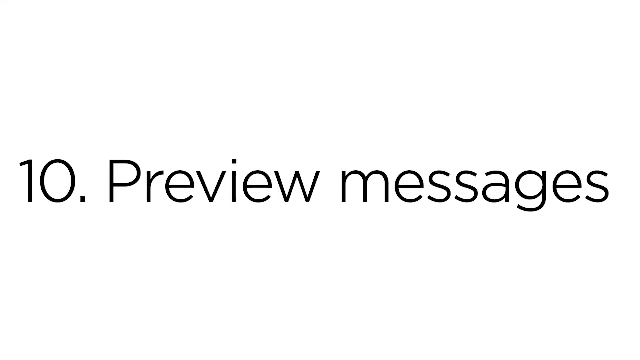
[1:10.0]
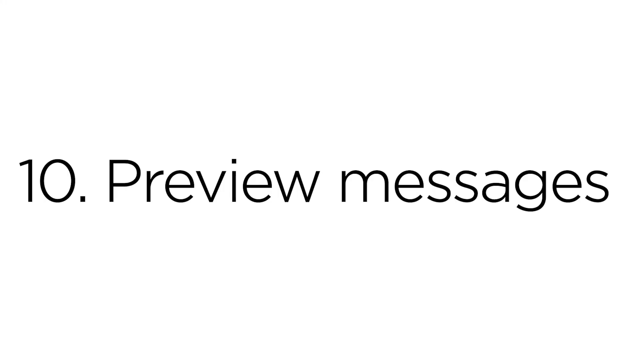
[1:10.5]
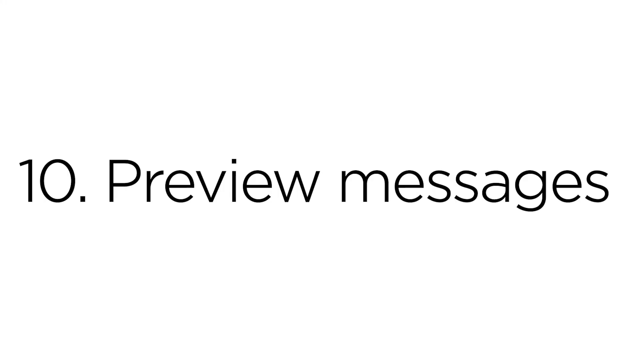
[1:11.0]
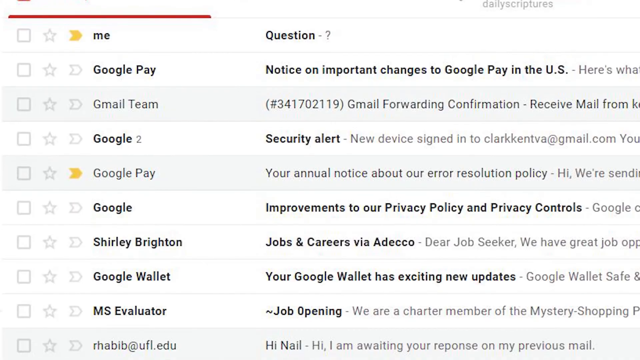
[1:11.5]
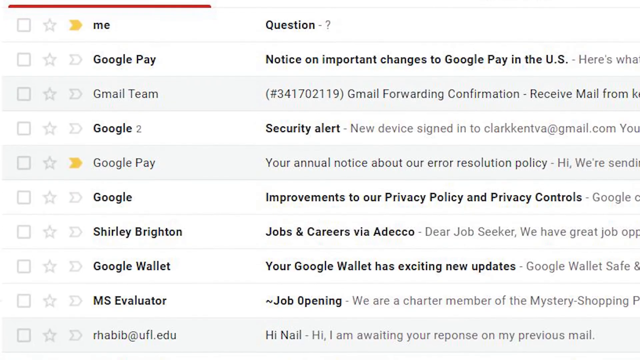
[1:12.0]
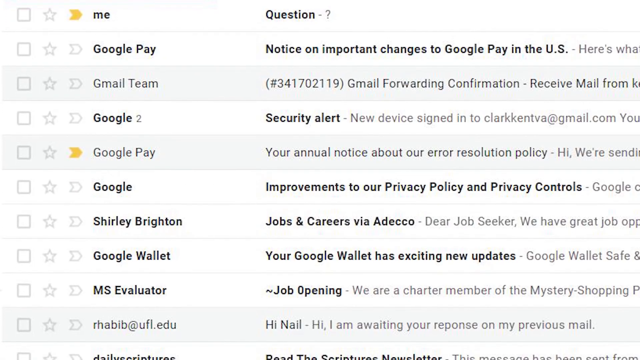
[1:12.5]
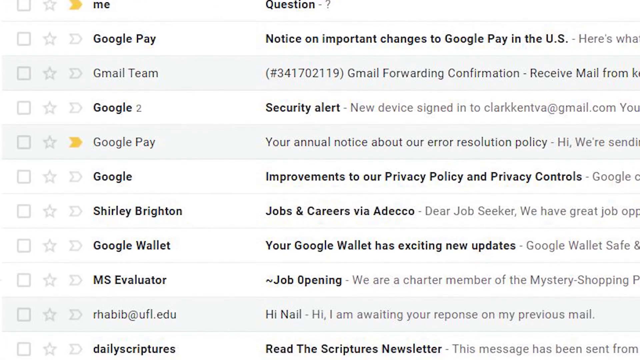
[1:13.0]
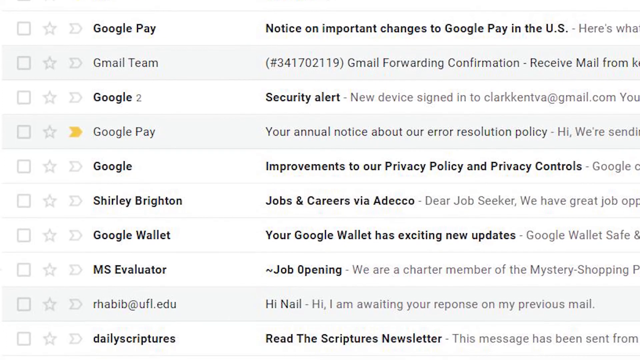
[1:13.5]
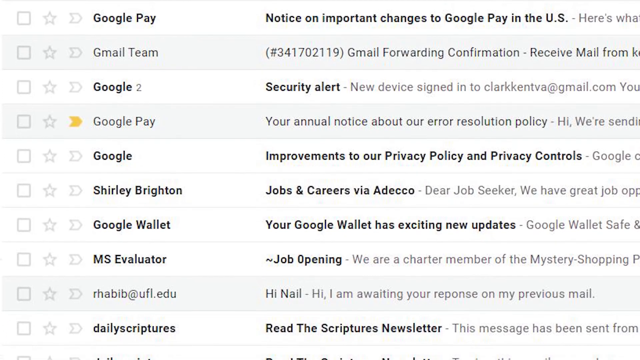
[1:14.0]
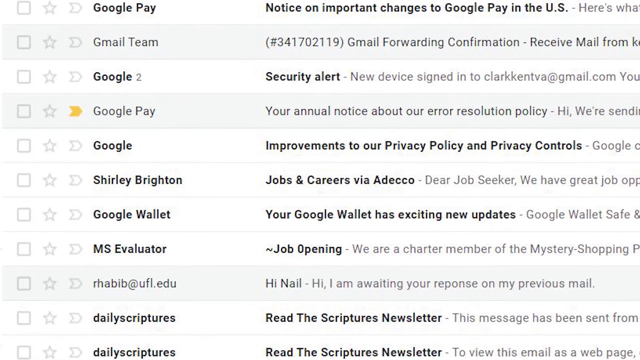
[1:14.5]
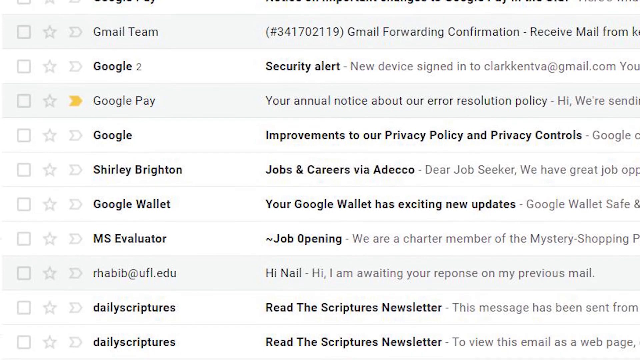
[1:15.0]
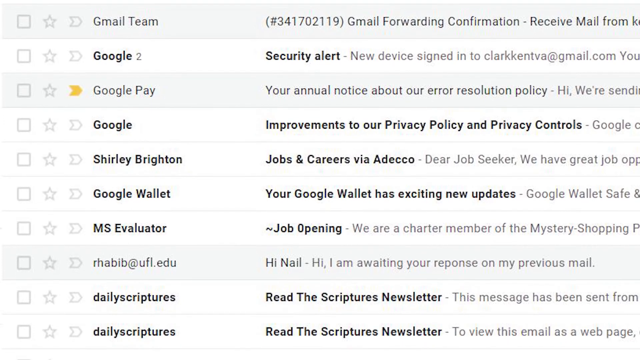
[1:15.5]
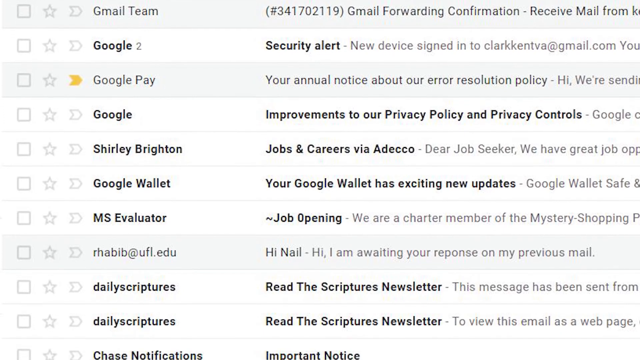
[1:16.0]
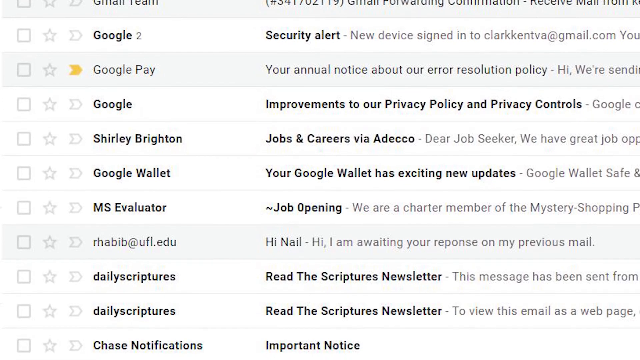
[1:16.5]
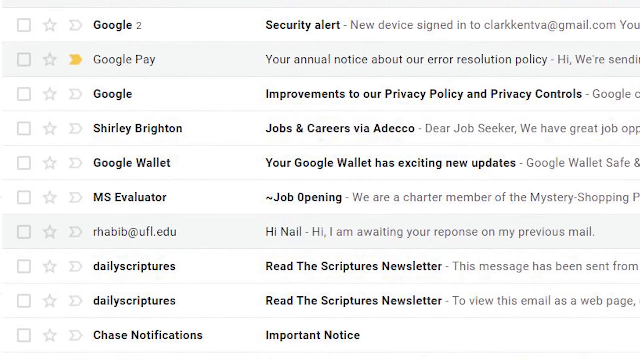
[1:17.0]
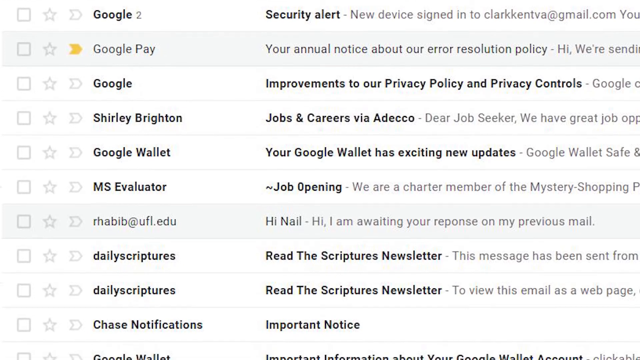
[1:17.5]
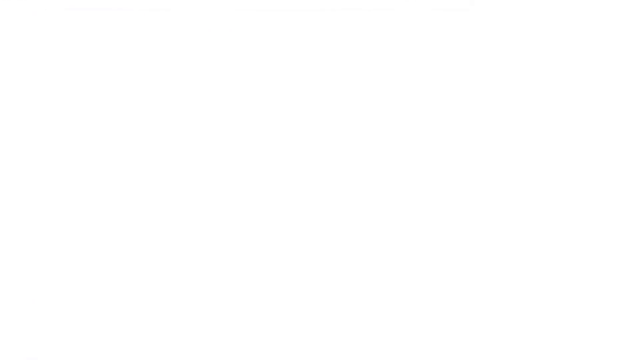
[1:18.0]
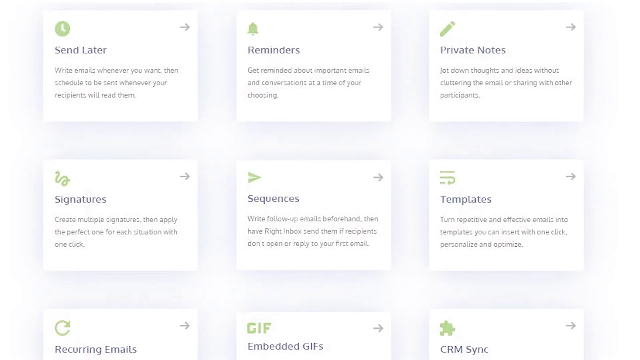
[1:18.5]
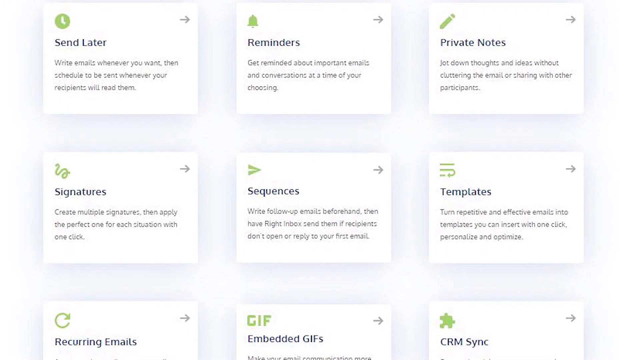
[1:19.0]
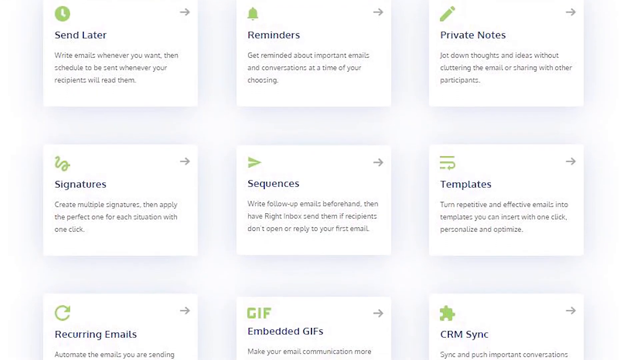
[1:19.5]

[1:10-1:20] After the "10 preview messages" screen, the inbox appears, and the camera slowly pans downward to view all the emails currently in it. The screen then quickly turns white and changes to another page listing options such as send later, reminders, private notes, signatures, sequences and templates. The page scrolls down to show more options, such as recurring emails, embedded GIFs and CRM Sync.